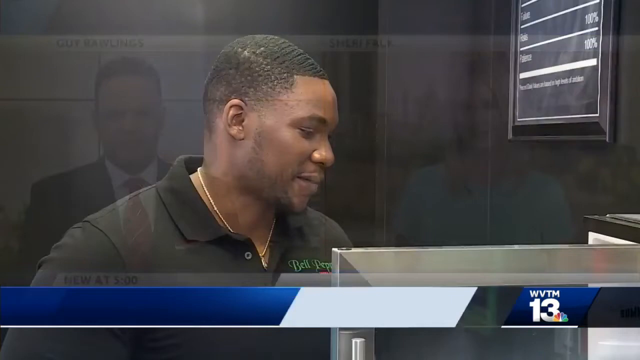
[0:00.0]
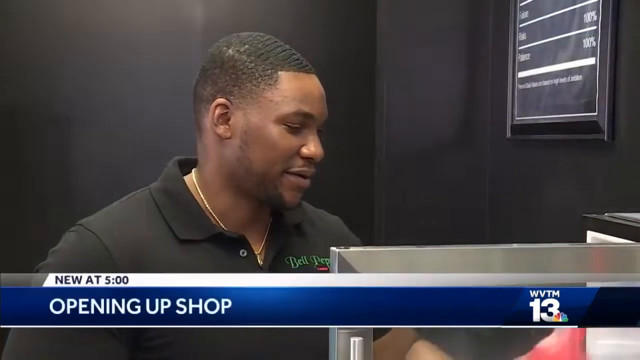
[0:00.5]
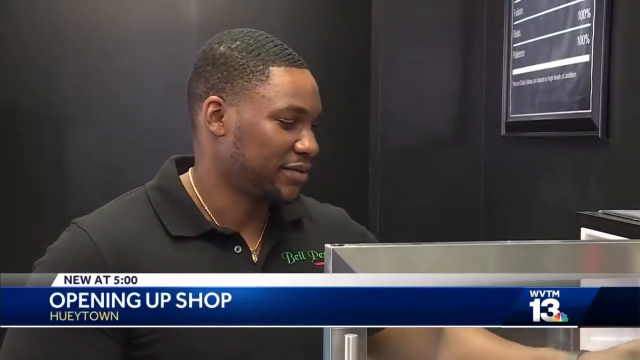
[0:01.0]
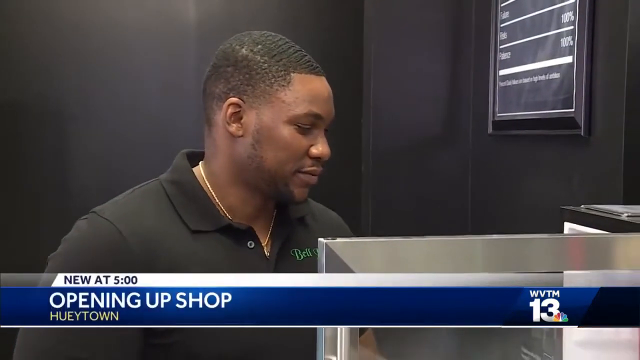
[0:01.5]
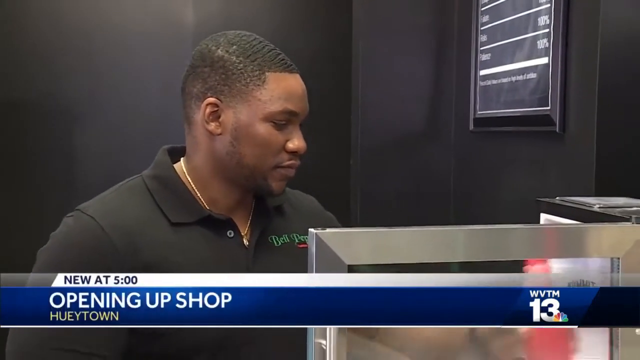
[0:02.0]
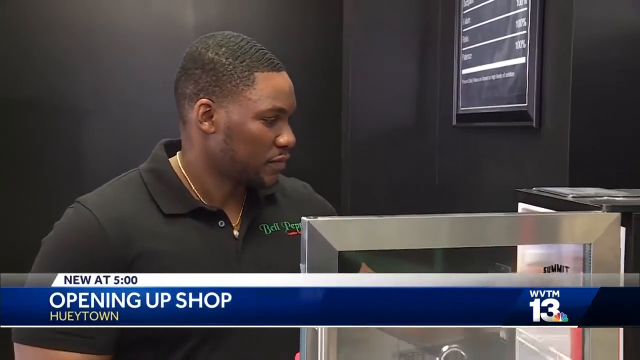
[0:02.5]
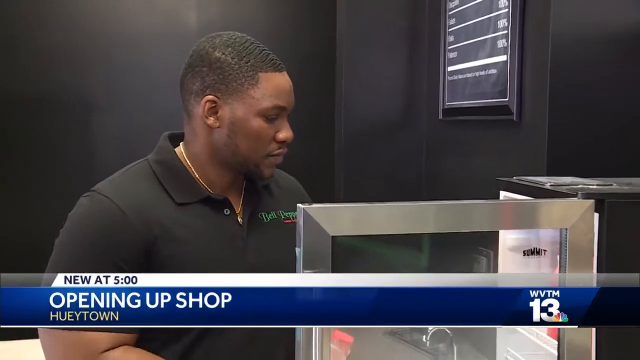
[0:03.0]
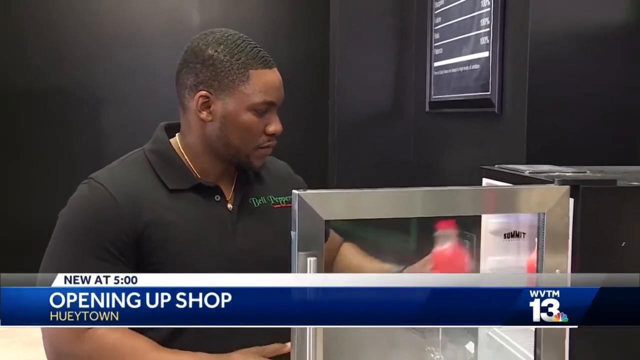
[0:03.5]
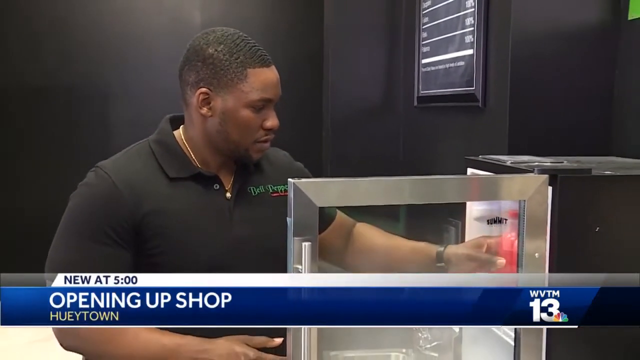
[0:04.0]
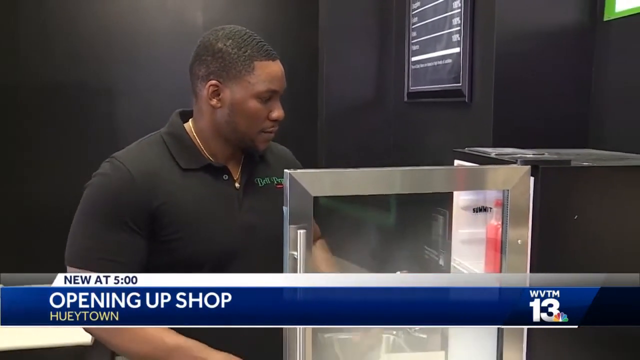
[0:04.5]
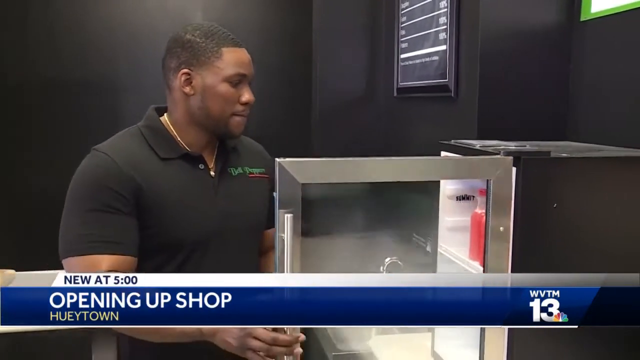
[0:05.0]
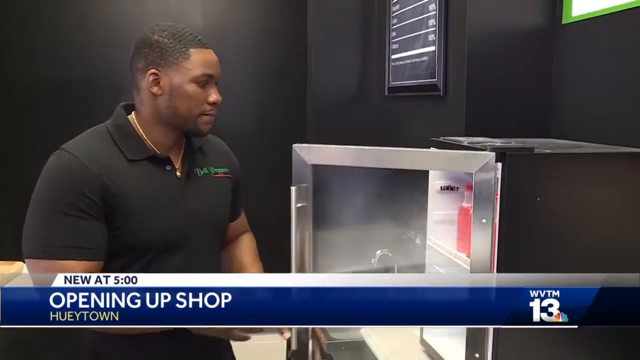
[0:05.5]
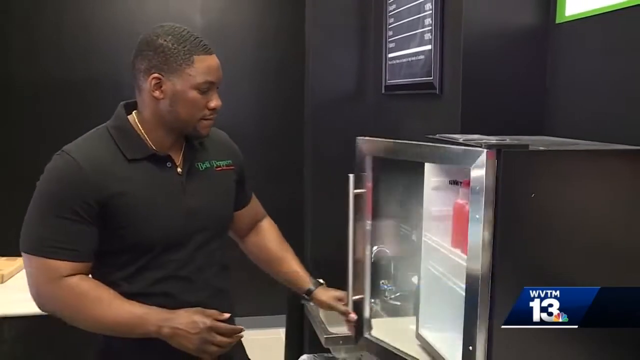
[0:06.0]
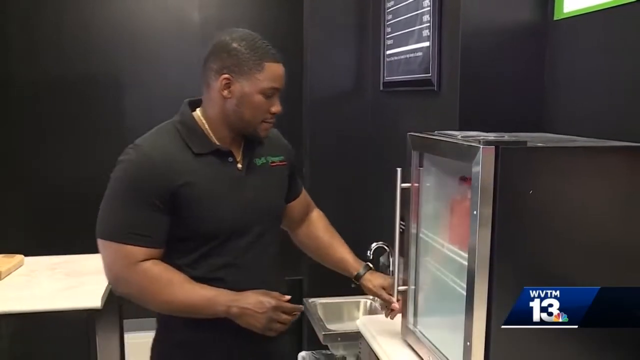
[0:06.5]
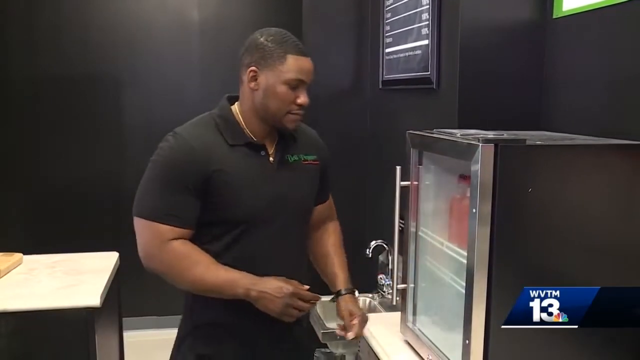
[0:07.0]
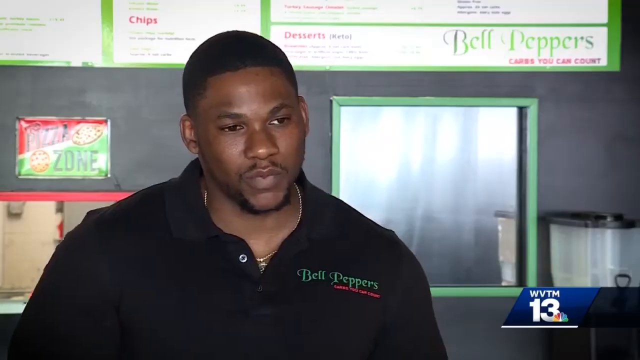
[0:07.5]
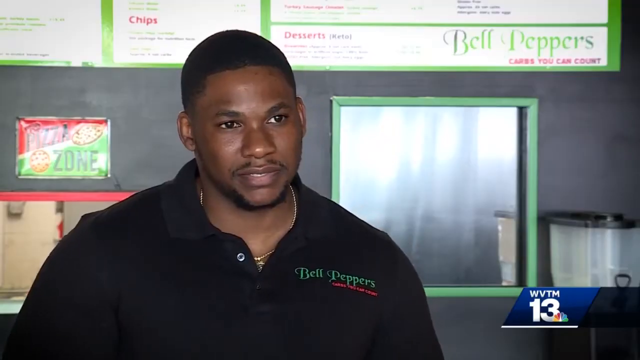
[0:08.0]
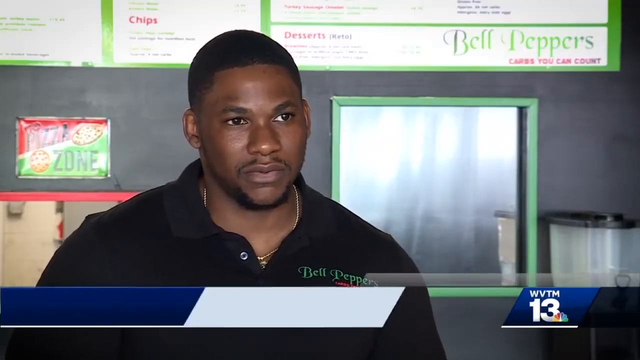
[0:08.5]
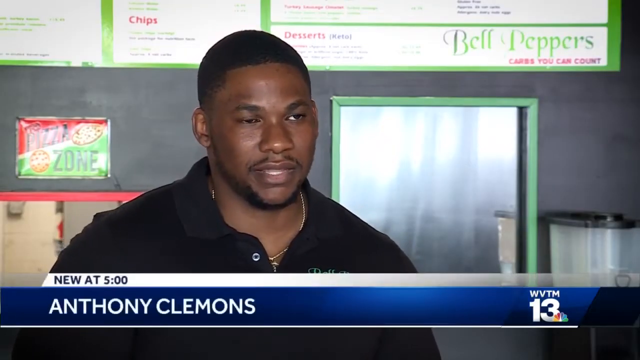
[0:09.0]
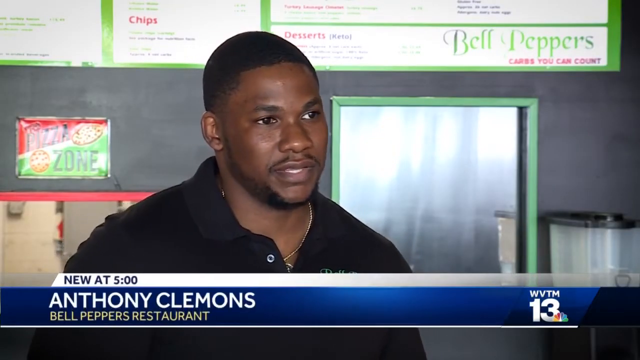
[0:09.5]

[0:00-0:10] The segment is called opening up shop. An individual is shown with different items in a fridge. He is Anthony Clemens from Bell Peppers. It is unclear whether this is a restaurant or just a convenience store, and he appears to be the subject of an interview for the news story.